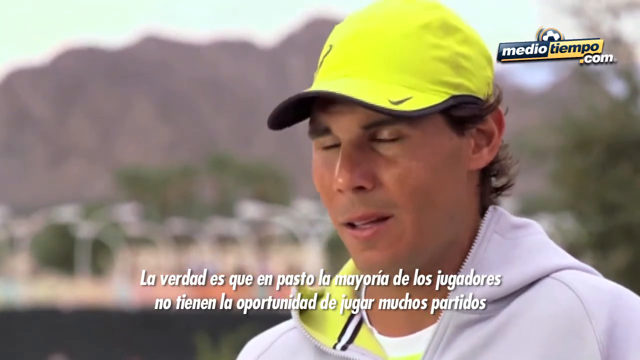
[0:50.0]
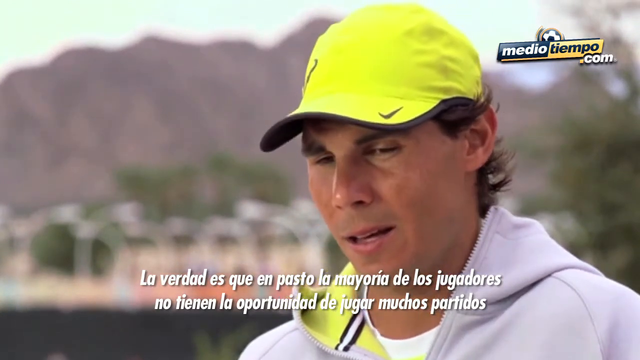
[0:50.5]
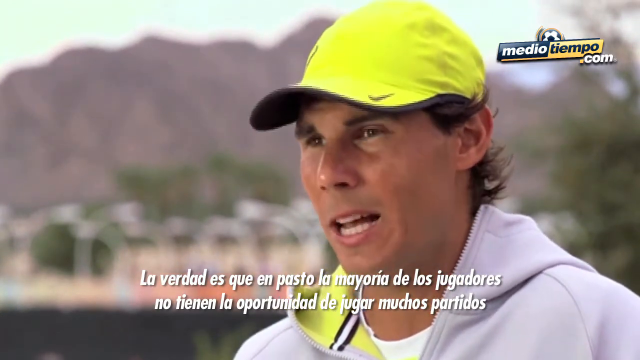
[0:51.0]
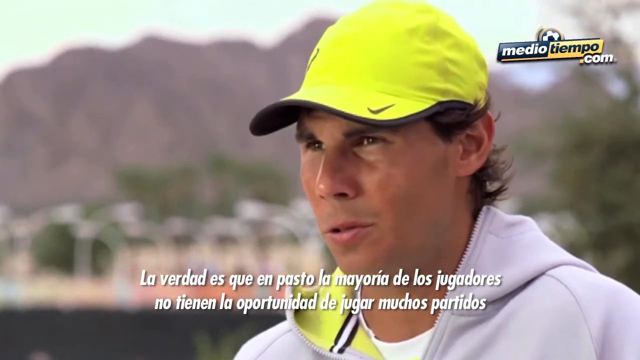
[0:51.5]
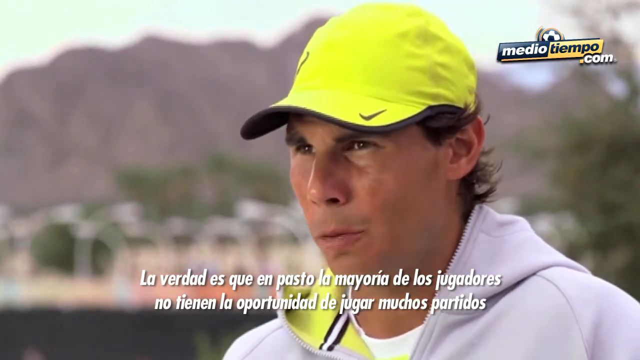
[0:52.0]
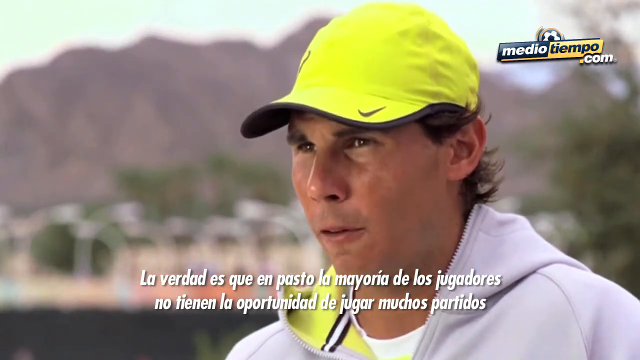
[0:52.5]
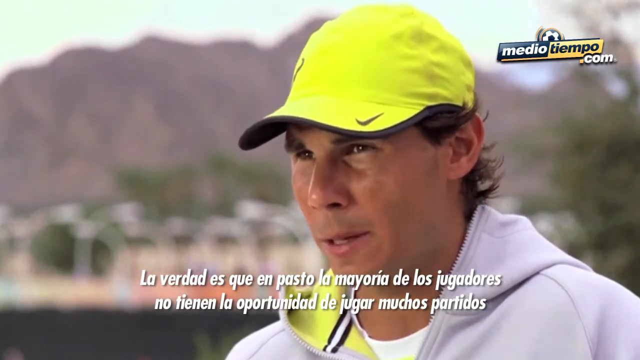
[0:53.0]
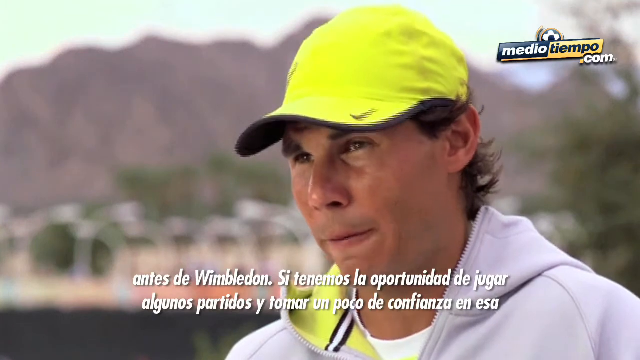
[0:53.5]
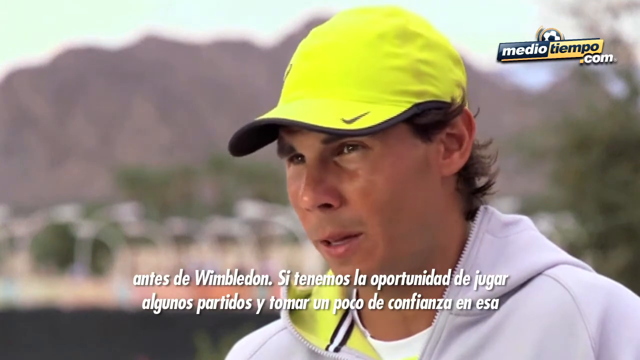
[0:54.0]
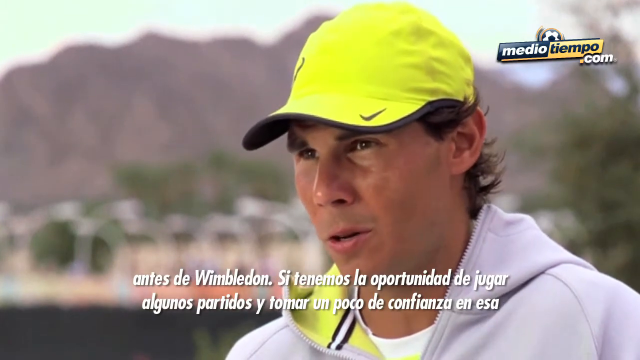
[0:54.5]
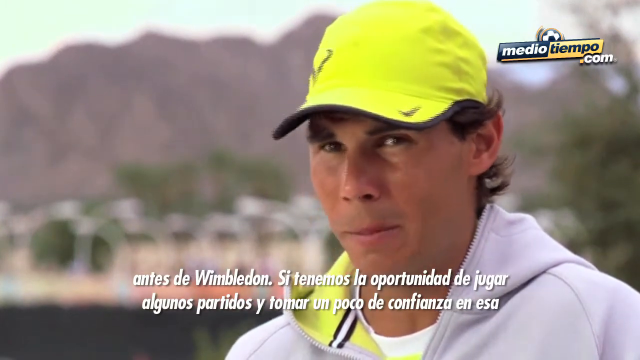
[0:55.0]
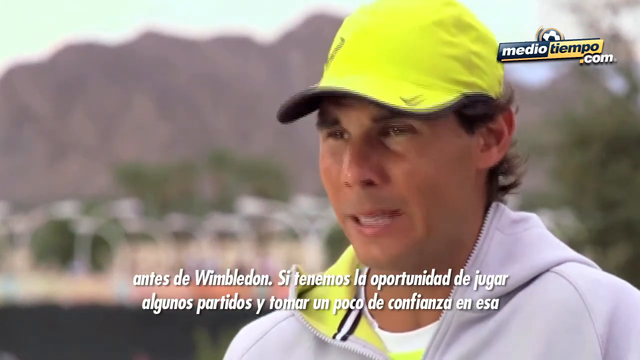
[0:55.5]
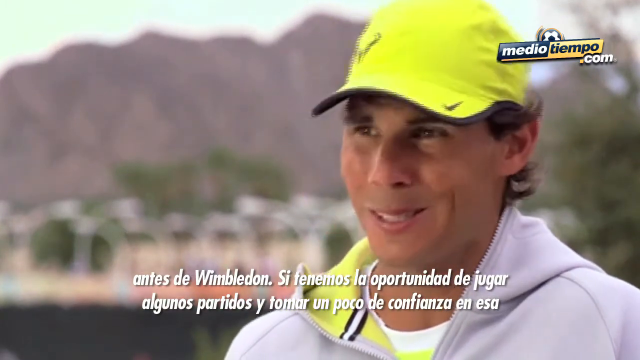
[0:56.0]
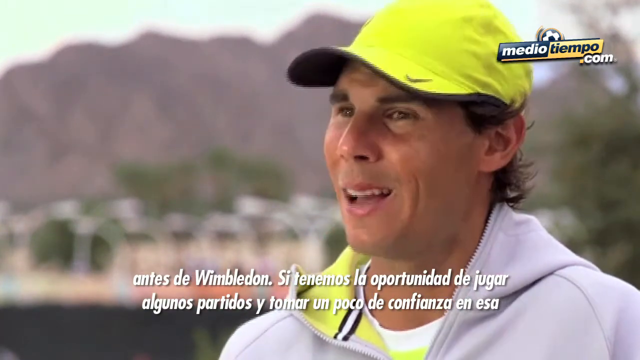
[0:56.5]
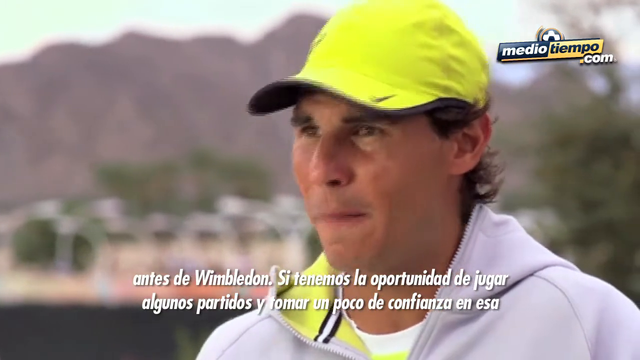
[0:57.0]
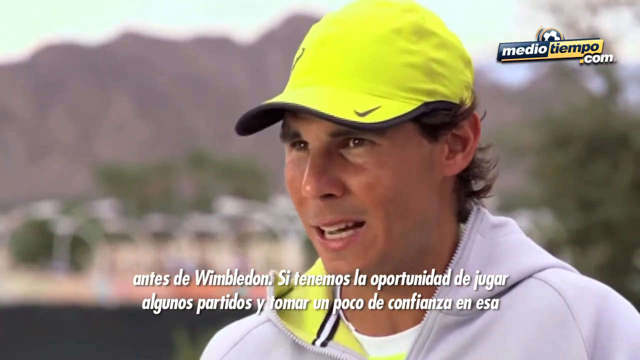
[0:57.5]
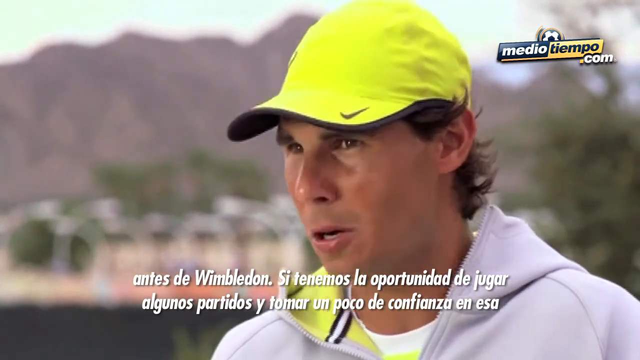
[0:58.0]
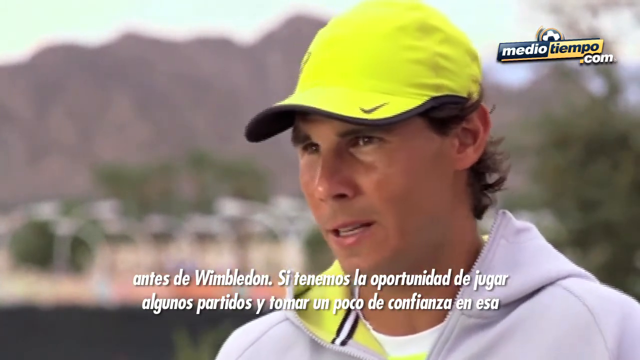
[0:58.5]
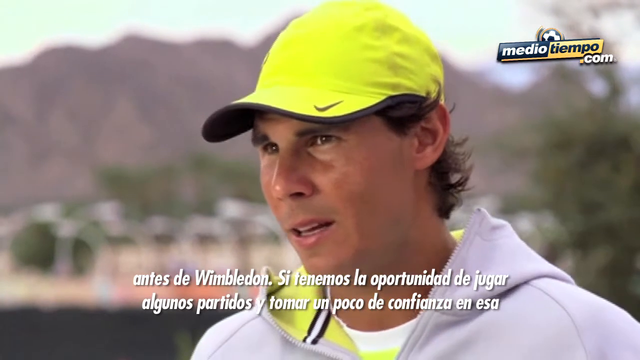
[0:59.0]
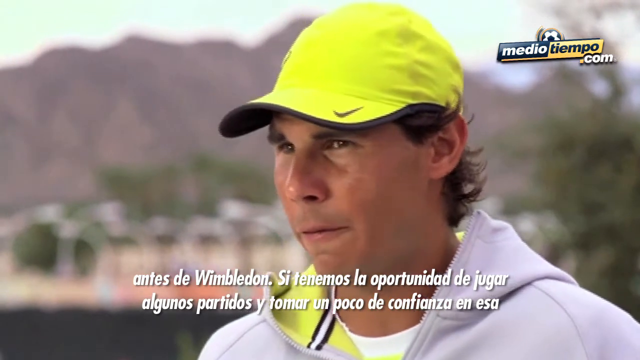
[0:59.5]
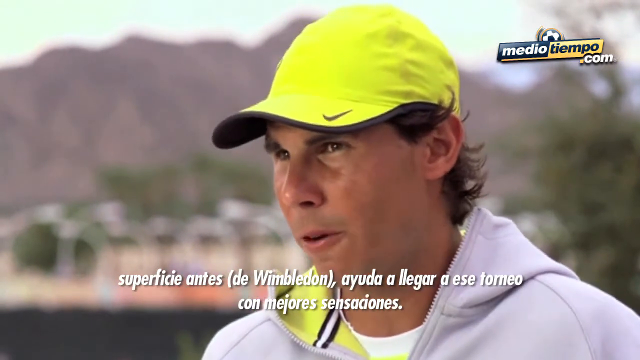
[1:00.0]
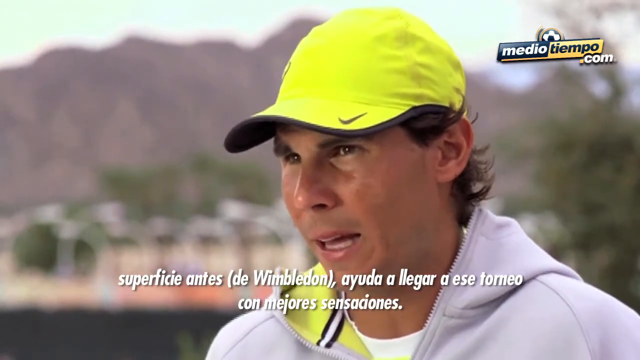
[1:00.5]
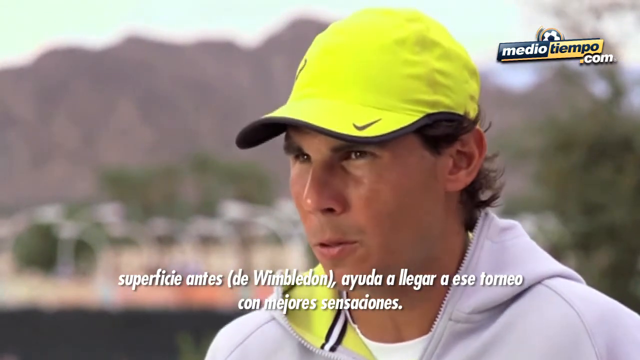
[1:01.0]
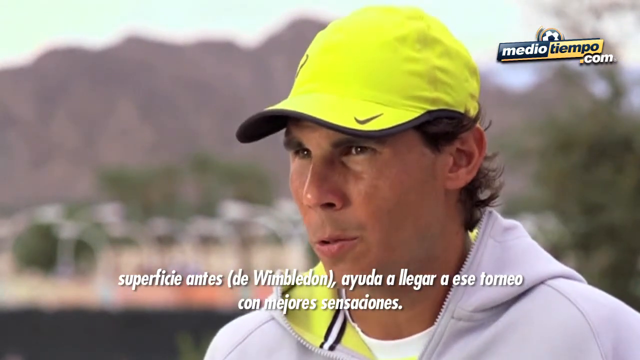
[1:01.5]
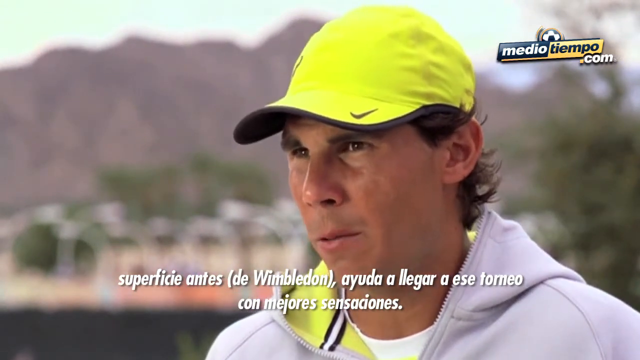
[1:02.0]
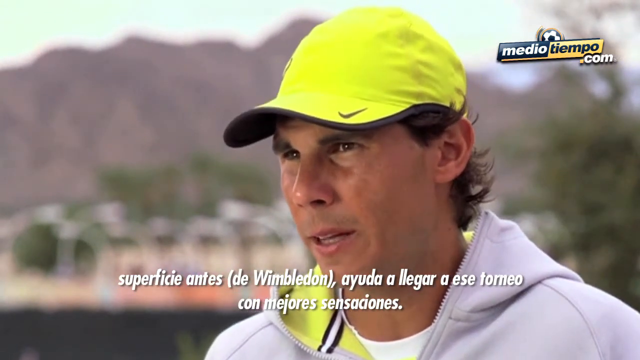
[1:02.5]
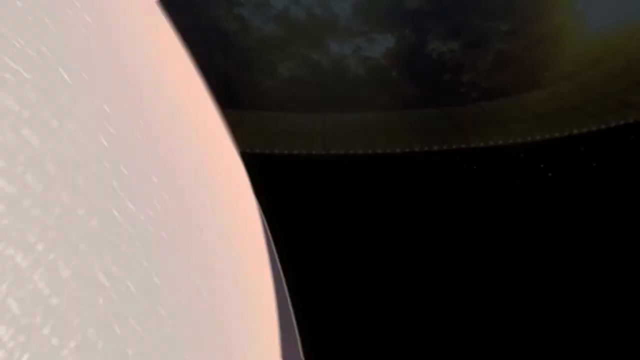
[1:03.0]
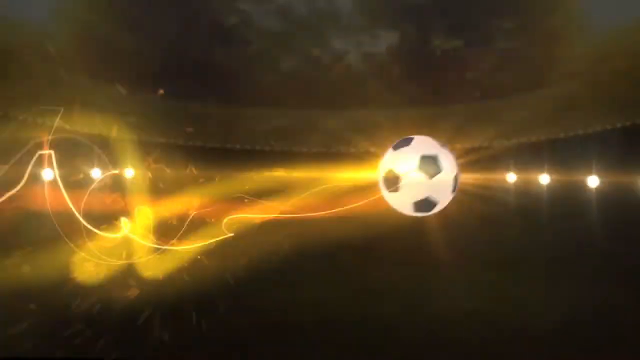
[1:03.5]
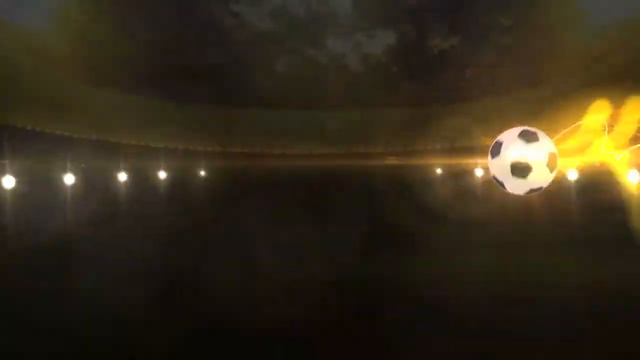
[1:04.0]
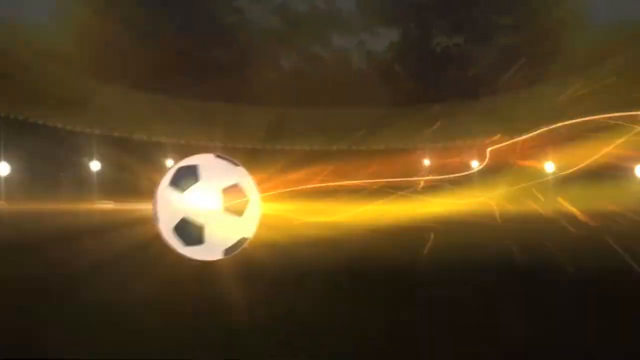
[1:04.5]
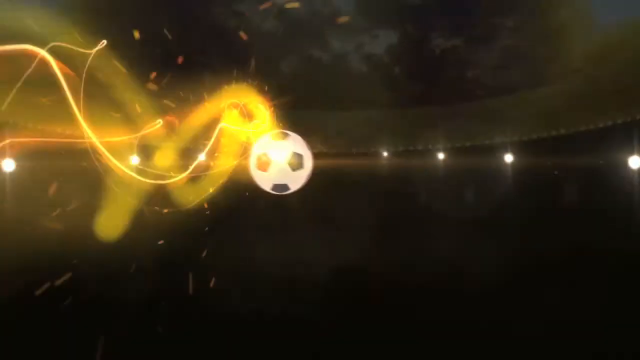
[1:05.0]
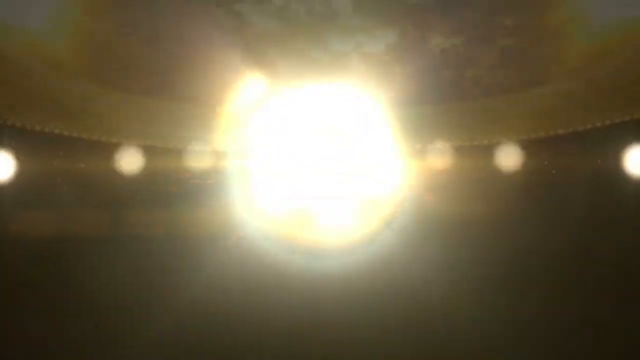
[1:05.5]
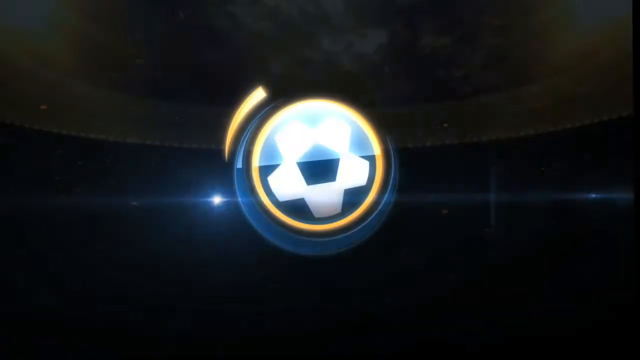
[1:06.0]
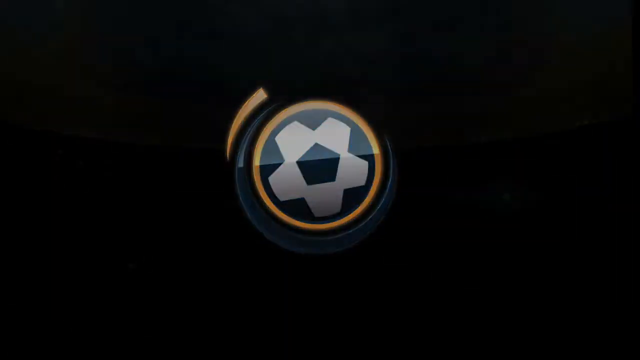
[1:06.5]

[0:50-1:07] Rafael Nadal continues his interview, wearing a fluorescent yellow hat with a black Nike logo and a black underside to the brim. A "Mediotiempo.com" logo appears over his shoulder, black and yellow with white and black print and a soccer ball attached. Behind him are blurred trees, perhaps a blurred parking lot, and a blurred mountain range. He wears a gray sweatshirt with the hood lined in fluorescent yellow. Facing to his right, he talks to an interviewer who is not on screen, and at some point he appears to be talking about Wimbledon. After the interview, the graphic from the start appears: a soccer ball with a kind of yellow-orange energy trail against a dark background with white lights. The ball hits the back end of the graphic, kind of a pulsing sun appears, and that turns into the black and white soccer ball logo with a yellow rim.